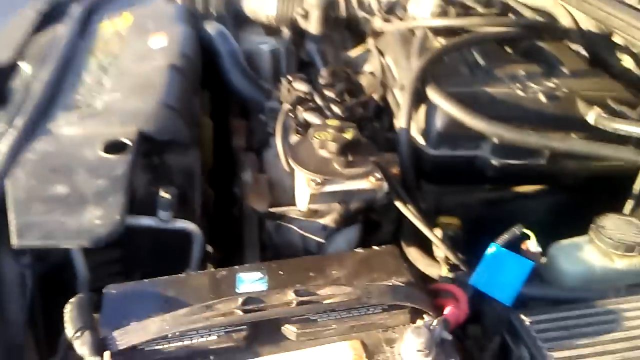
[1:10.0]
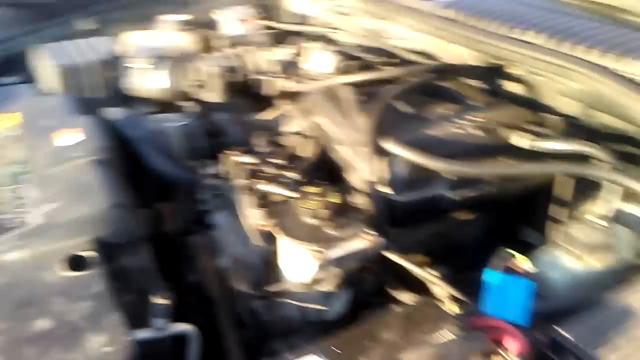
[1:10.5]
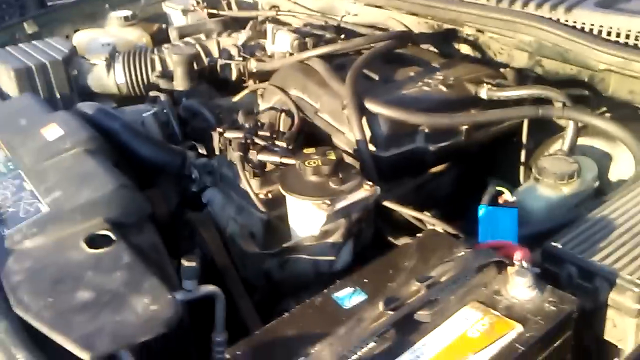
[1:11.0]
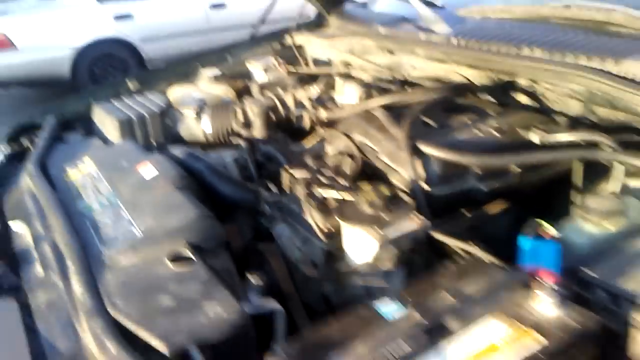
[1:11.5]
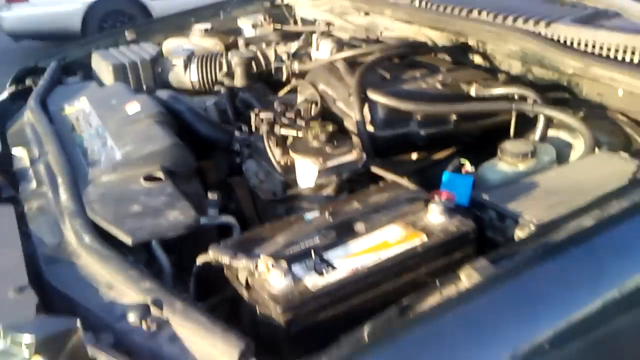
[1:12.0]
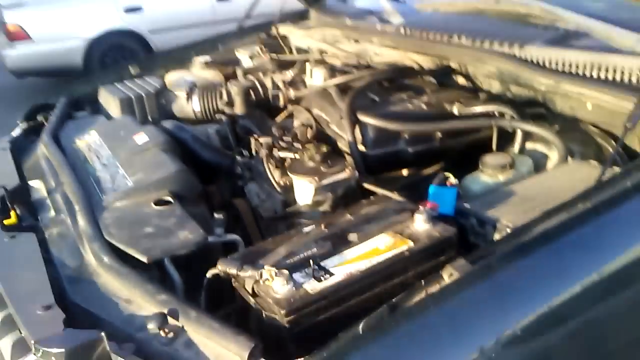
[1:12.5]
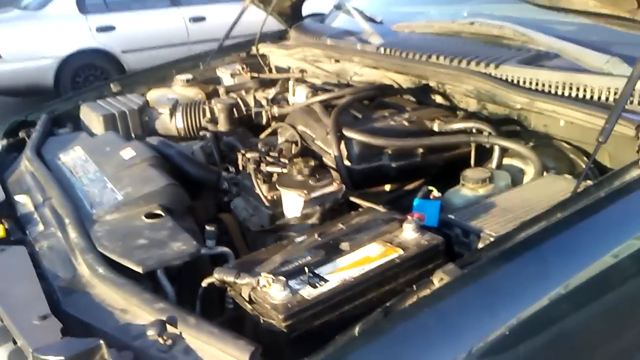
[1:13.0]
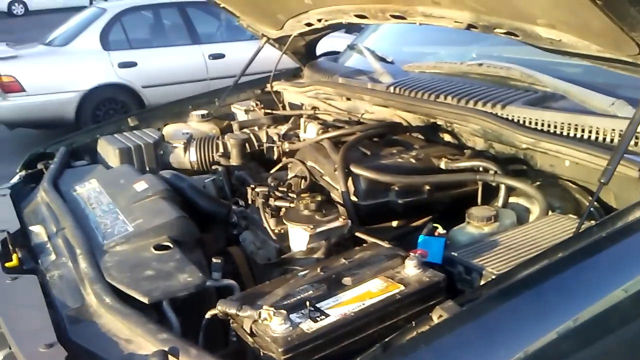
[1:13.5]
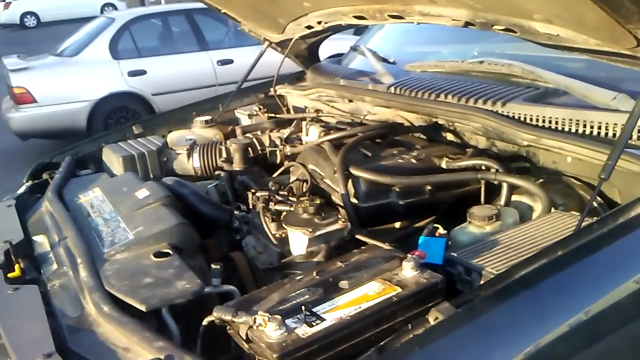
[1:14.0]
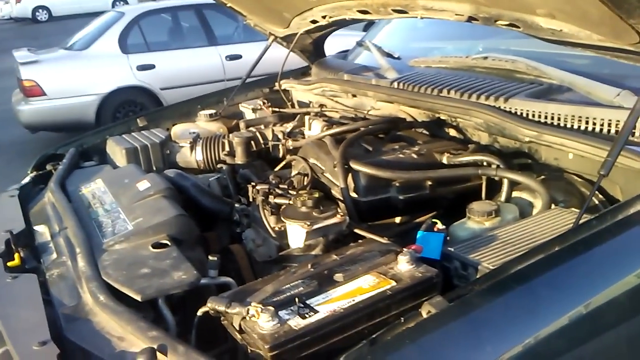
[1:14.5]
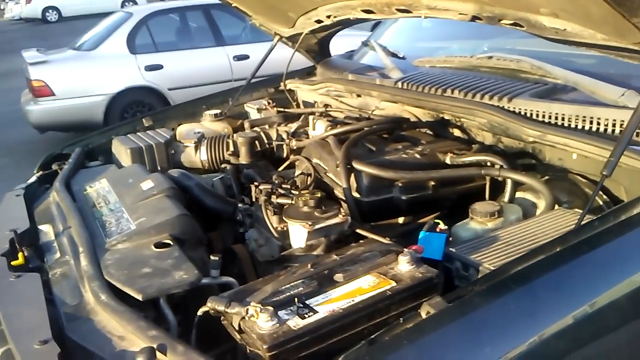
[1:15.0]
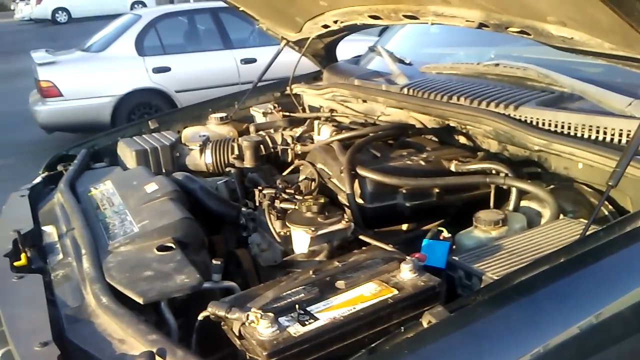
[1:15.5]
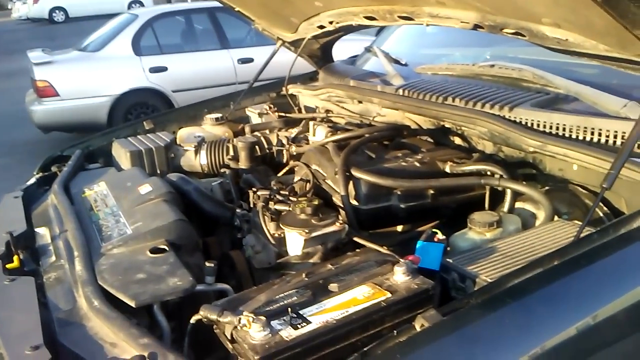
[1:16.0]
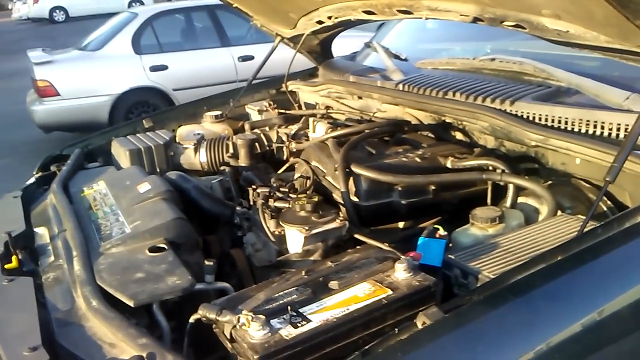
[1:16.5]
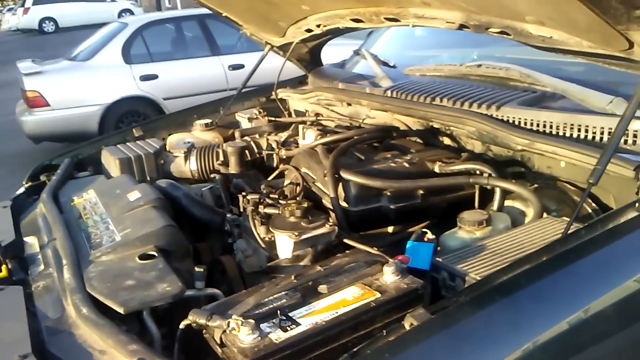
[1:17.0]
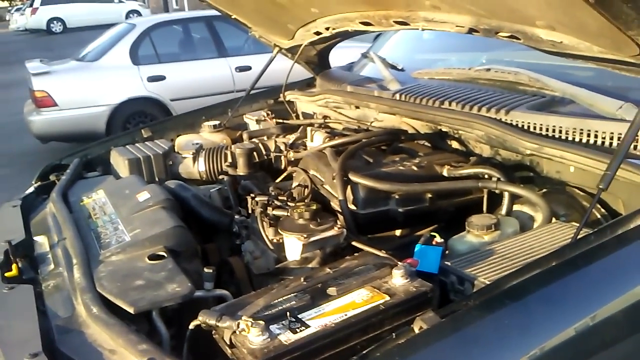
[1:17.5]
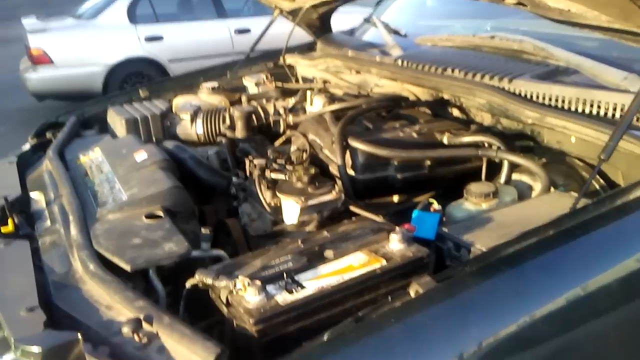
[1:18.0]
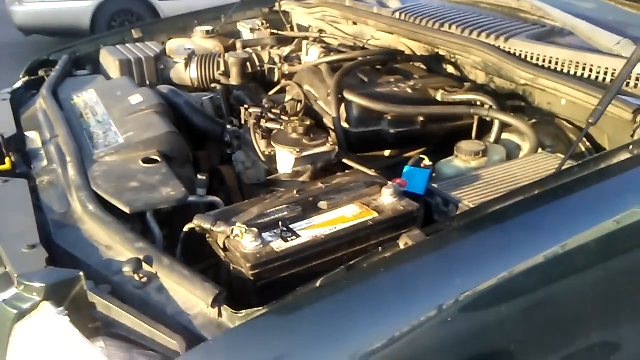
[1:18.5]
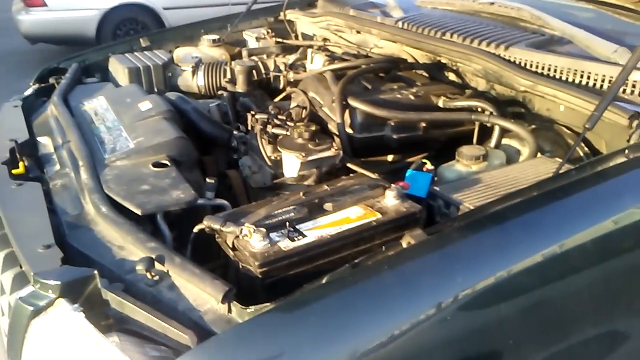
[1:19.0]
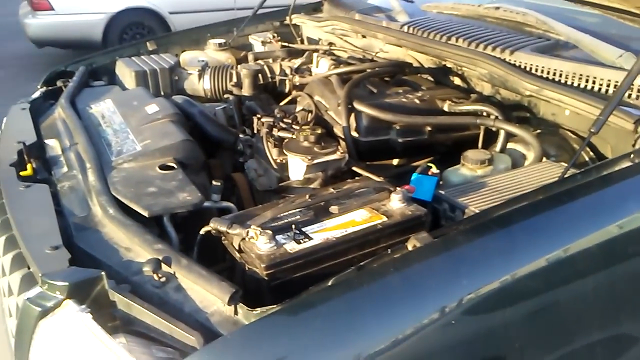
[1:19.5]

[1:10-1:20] A close-up view shows a car's engine compartment, with the camera somewhat shaky. The hood has been pried open and lifted up. To the left is a small silver car. The vehicle itself is dark green or dark gray, judging from the body parts visible beside the engine compartment. Inside the compartment, different components are connected with hoses and pipes. Parts of the windshield are visible below the raised hood.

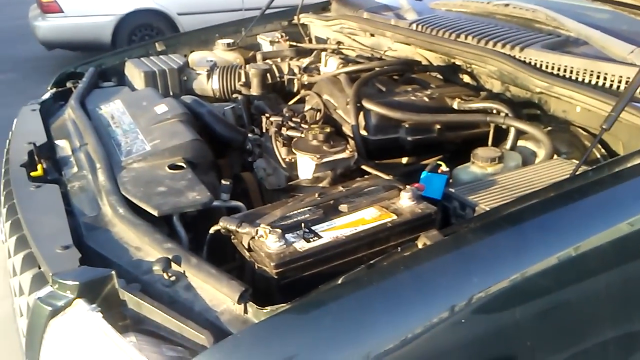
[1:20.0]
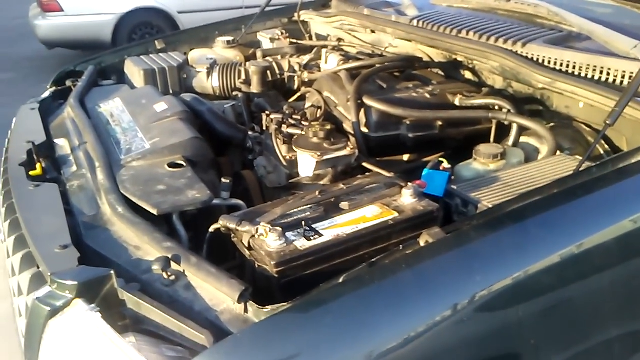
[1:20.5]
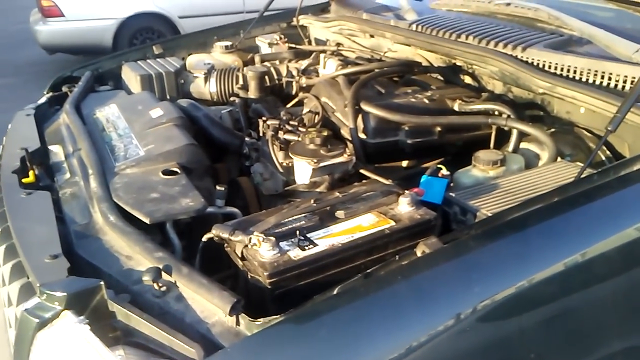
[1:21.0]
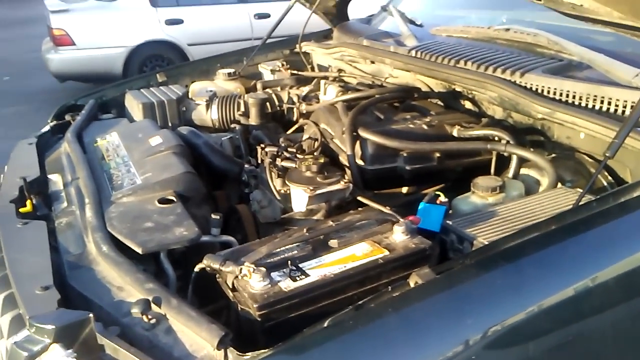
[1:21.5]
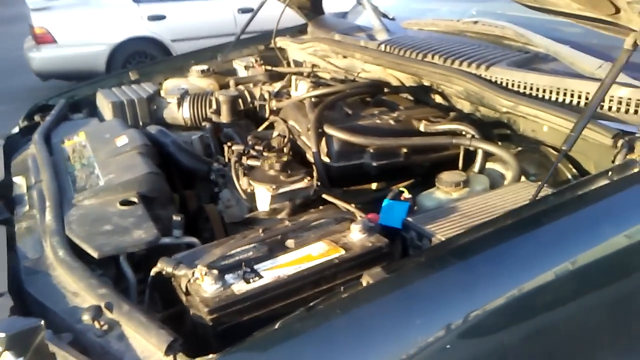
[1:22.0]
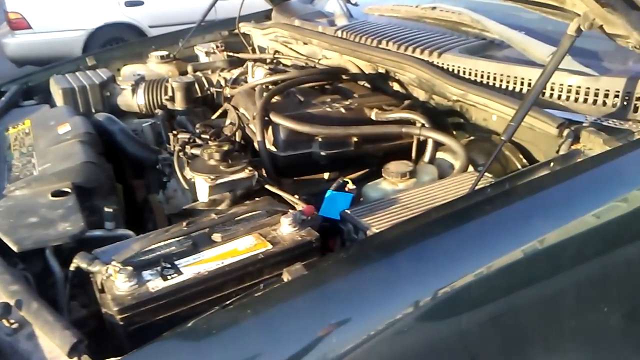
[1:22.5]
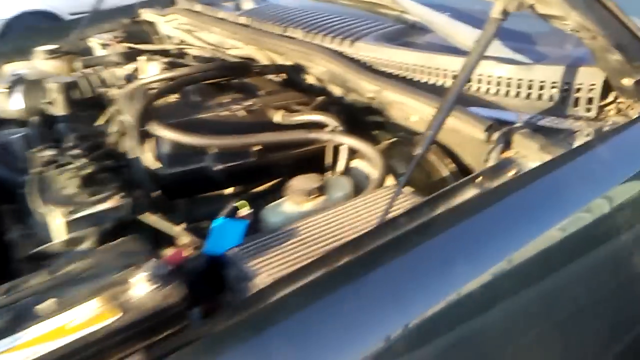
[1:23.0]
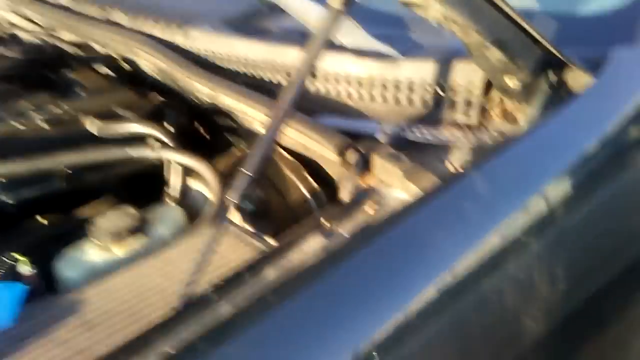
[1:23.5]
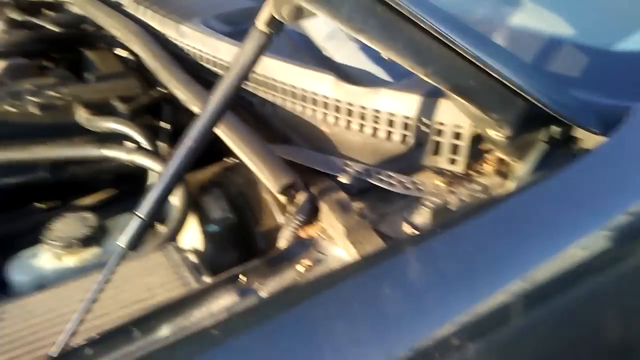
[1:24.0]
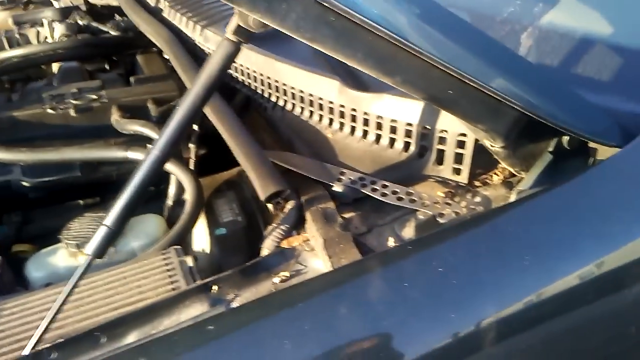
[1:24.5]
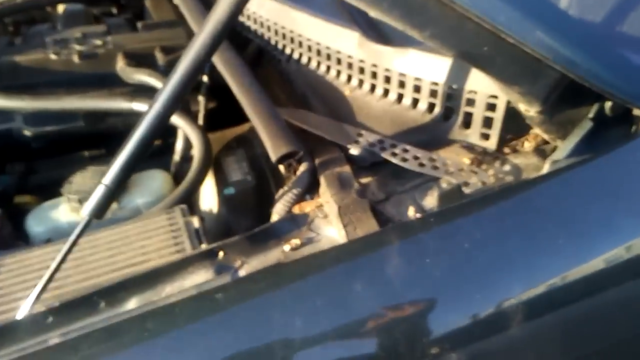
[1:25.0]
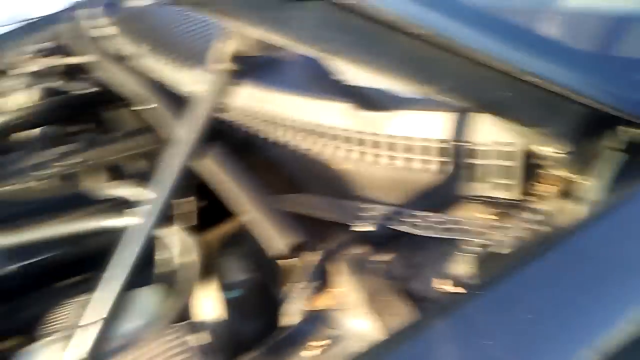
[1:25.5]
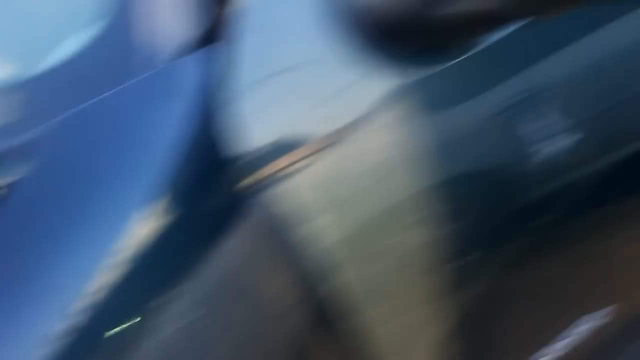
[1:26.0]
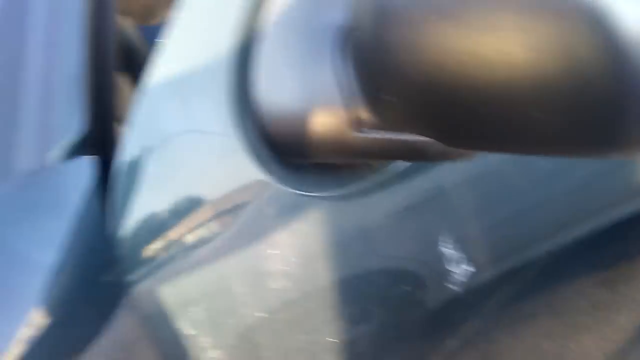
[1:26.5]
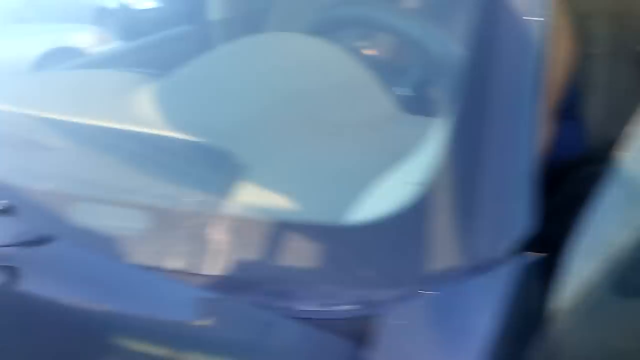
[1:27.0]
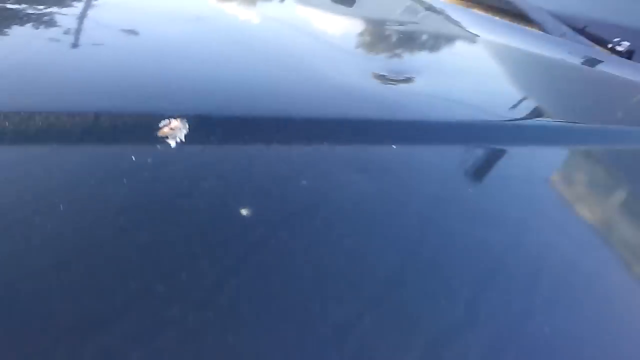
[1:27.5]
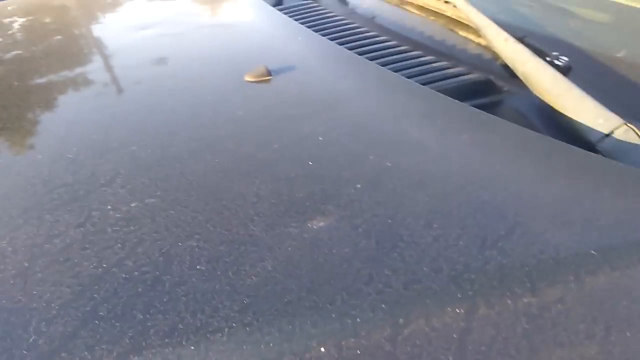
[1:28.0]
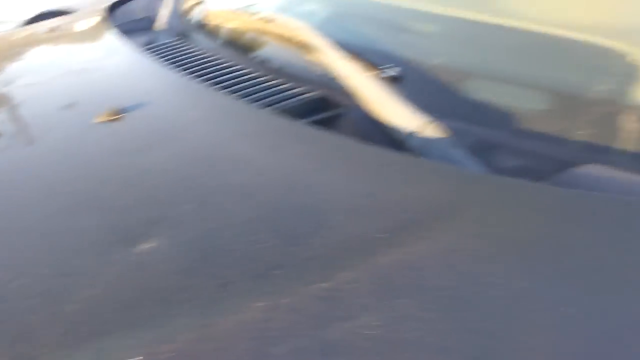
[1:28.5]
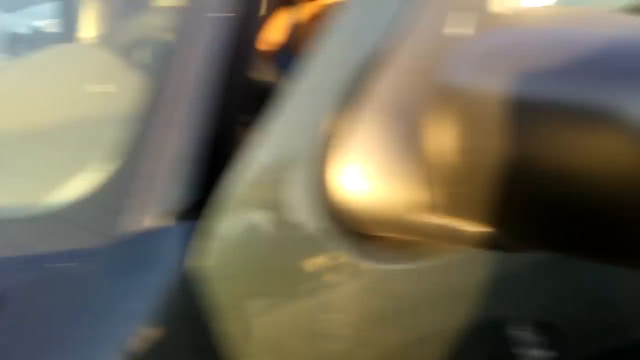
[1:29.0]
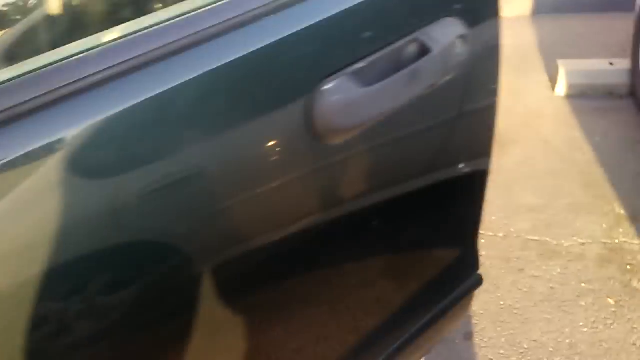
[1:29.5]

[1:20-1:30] A close-up view shows a car's engine compartment, filmed with a very shaky, unsteady camera. Various components inside are connected with hoses and pipes. To the right is a glimpse of the top of an opaque plastic compartment with a black, dusty-looking lid, possibly for power steering fluid, brake fluid, or wiper fluid. Below it on the same side is the battery with two battery heads. In the background to the upper left, the side of a white car is glimpsed. The body of the car with the open engine compartment seems to be dark green or dark grey. The camera pans close to the corner of the windshield and the open driver's side door, then pans left again as the hood is shut, covering the engine compartment. The camera then pans right to the door handle of the driver's side door.